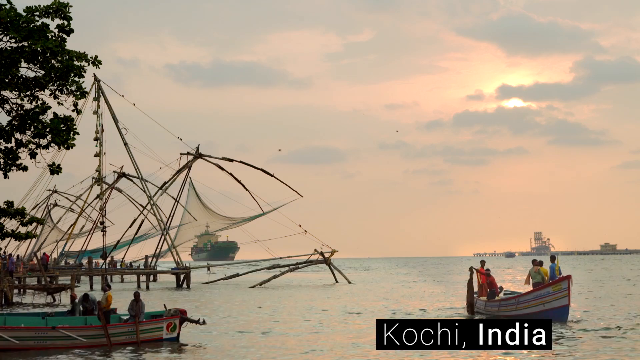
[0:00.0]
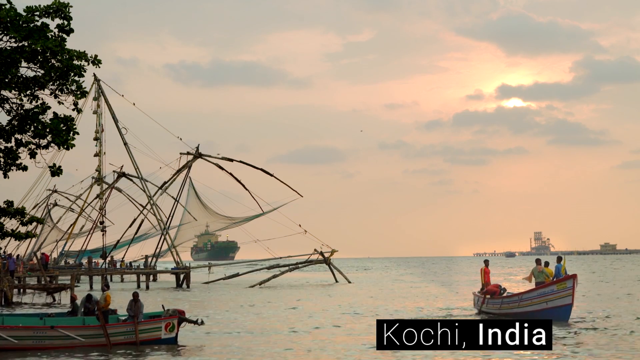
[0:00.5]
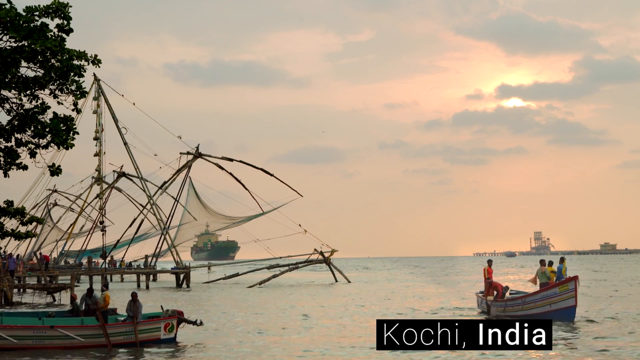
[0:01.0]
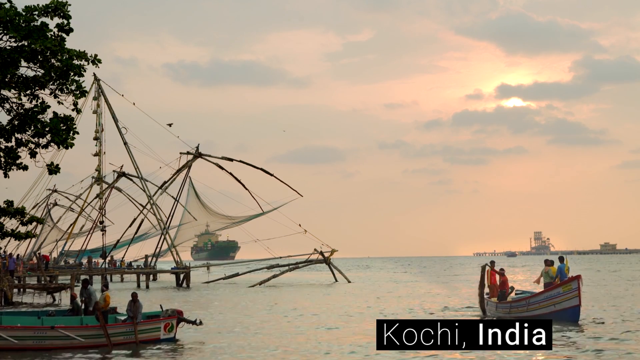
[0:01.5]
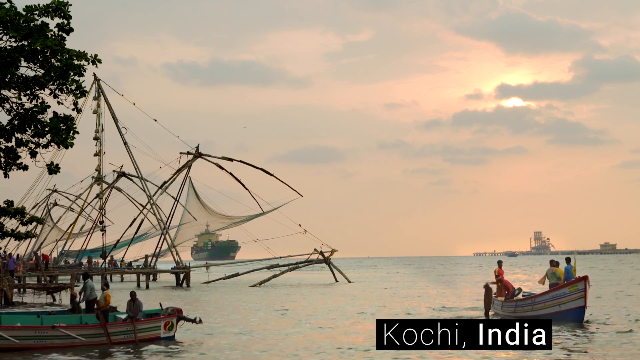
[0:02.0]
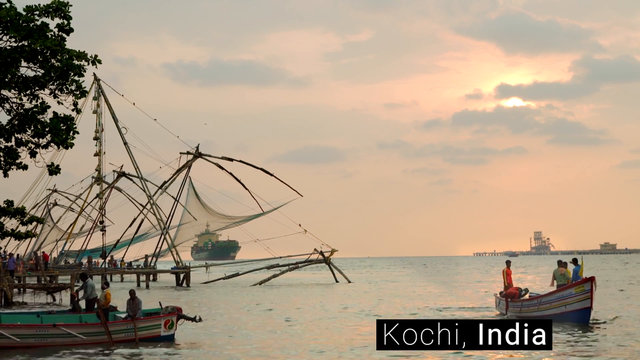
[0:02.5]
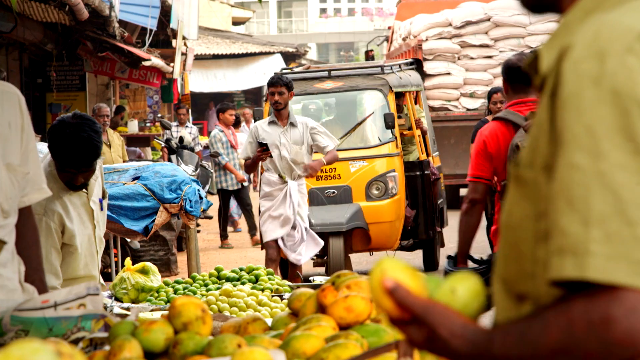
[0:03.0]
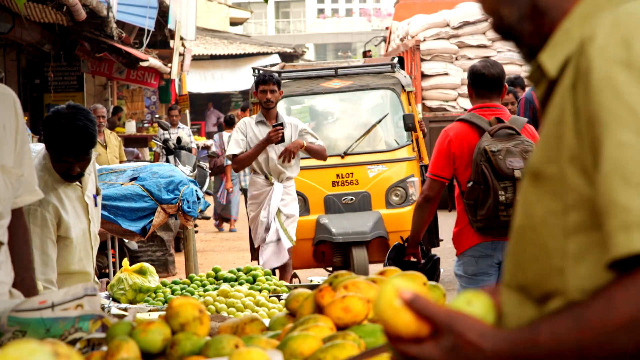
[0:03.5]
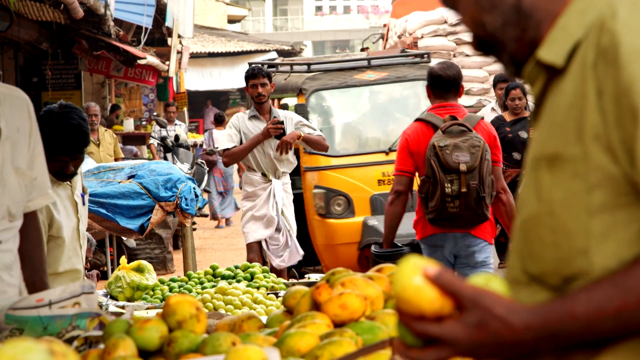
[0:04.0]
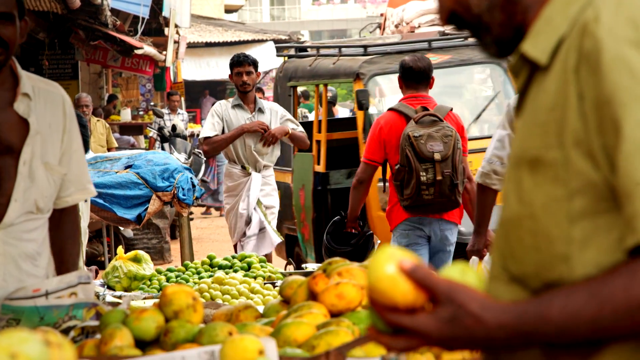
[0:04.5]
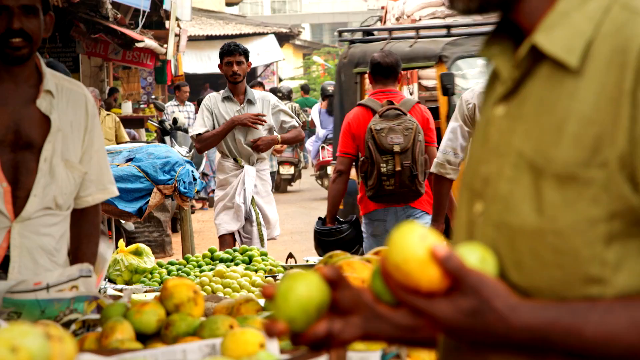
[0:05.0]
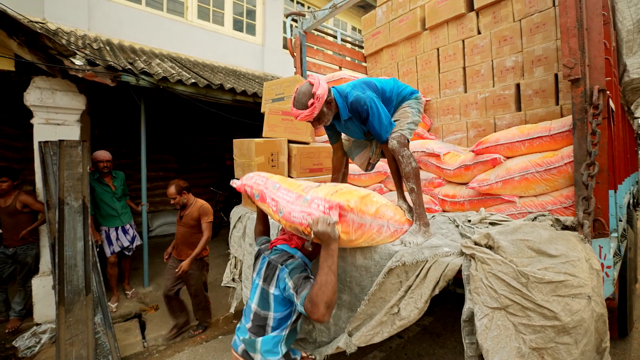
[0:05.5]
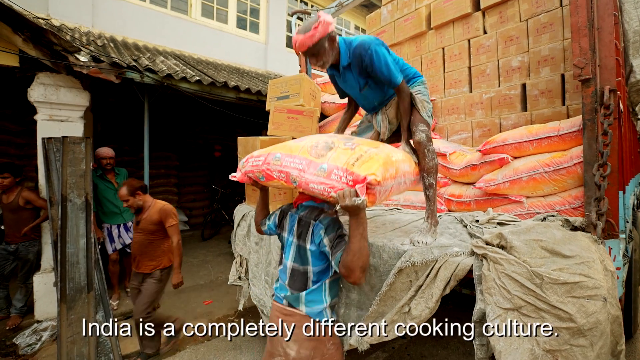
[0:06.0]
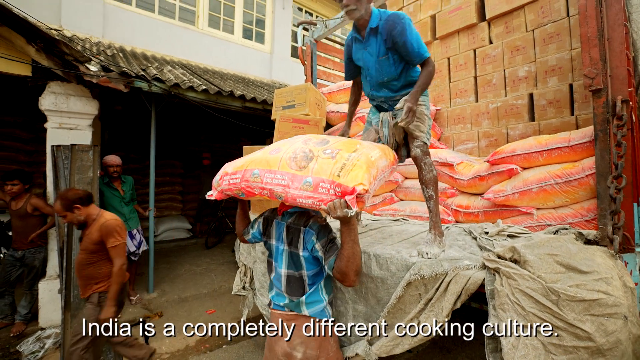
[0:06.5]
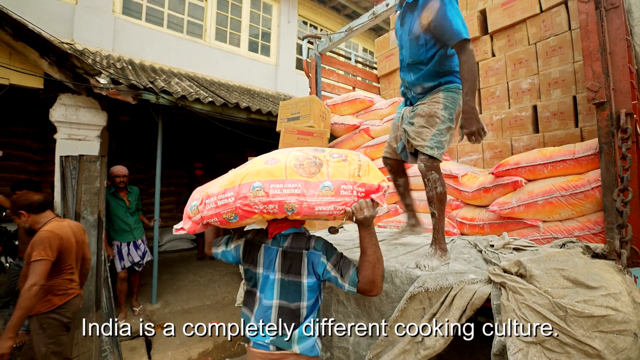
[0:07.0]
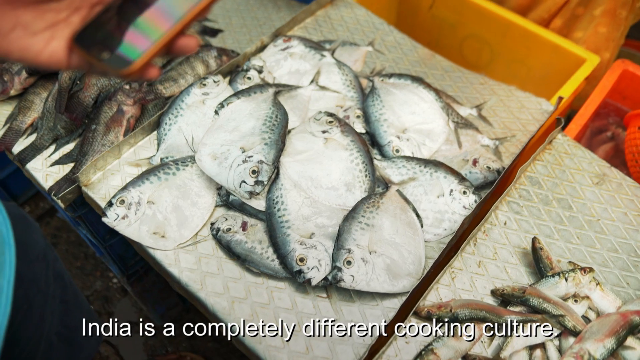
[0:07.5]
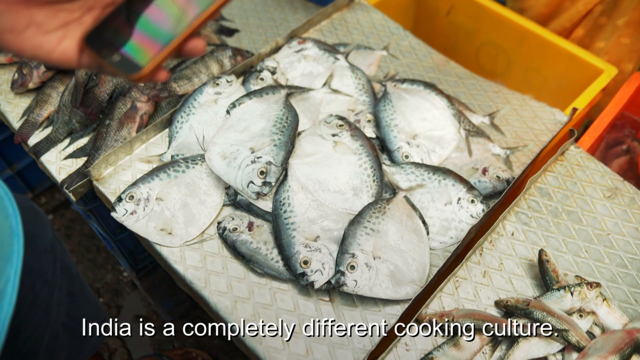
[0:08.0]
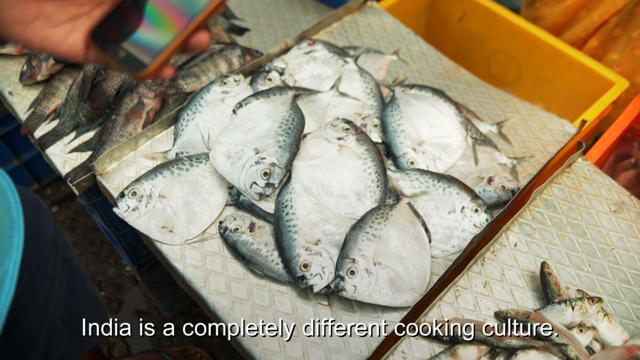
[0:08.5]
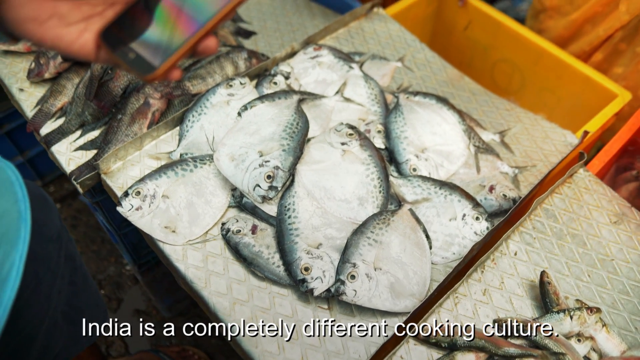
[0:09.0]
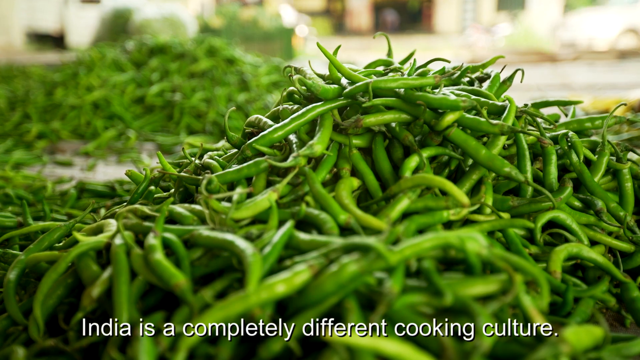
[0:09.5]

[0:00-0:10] A seaside of sorts appears at what looks like near sunset, with some boats on the water. The shot is very brief and quickly segues into what appears to be an open or outdoor market where people are selling things like green fruits. A small, narrow, yellow tuk-tuk-type taxi drives along, with a man in white short-sleeved garb walking in front of it. Someone then lifts a heavy bag, apparently of something like grain, onto their shoulder. A massive fish is shown, with text below it that reads "India is a completely different cooking culture." After that, text reads "we believe in".